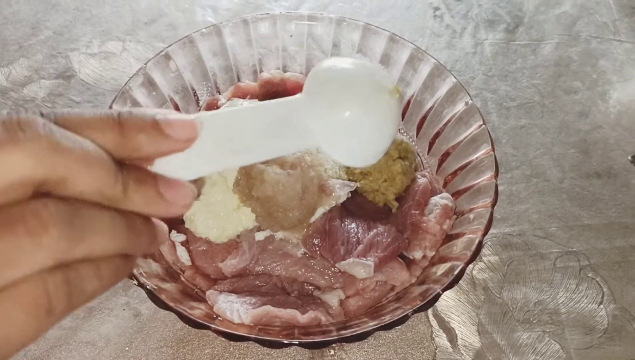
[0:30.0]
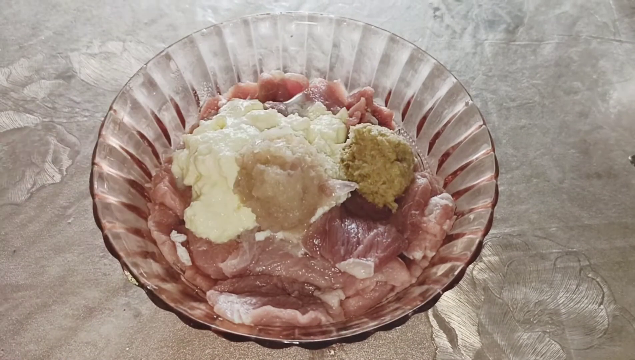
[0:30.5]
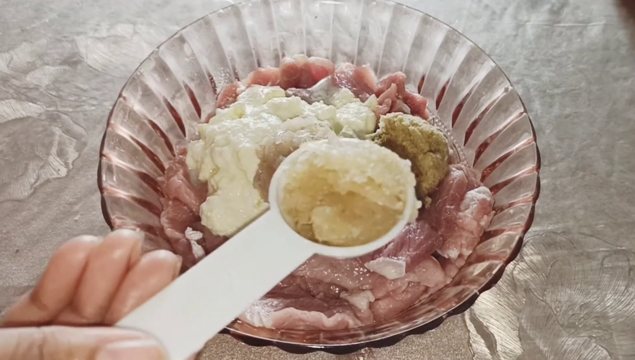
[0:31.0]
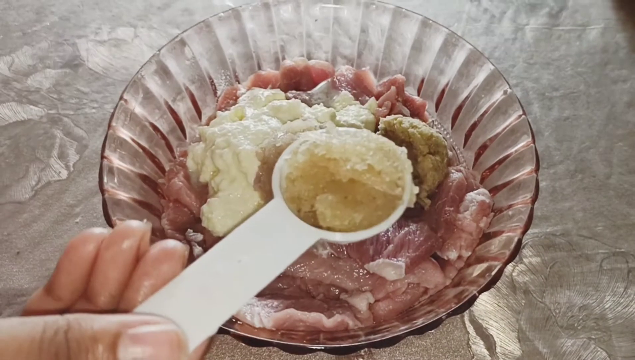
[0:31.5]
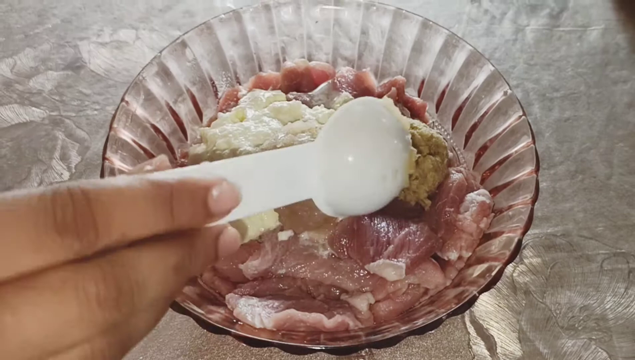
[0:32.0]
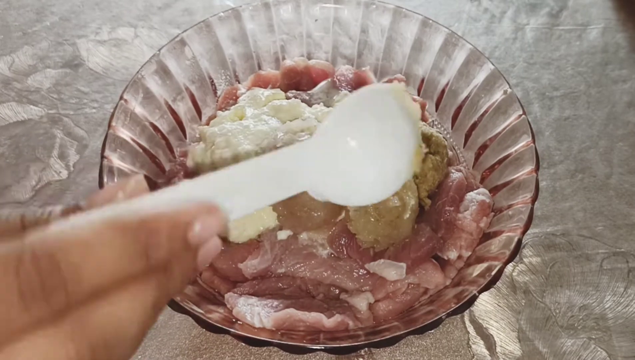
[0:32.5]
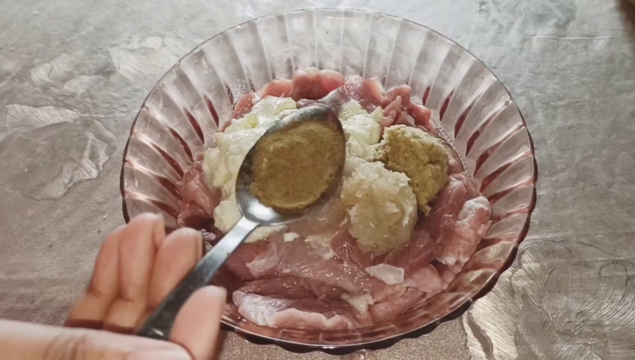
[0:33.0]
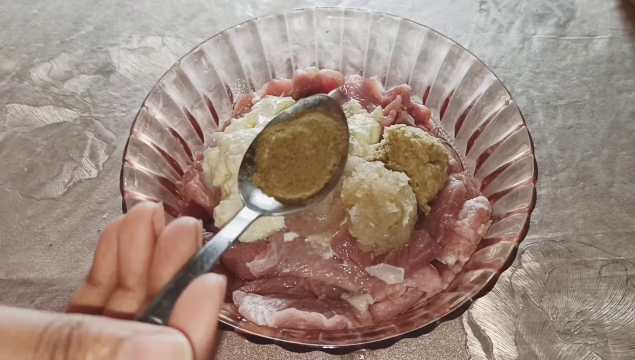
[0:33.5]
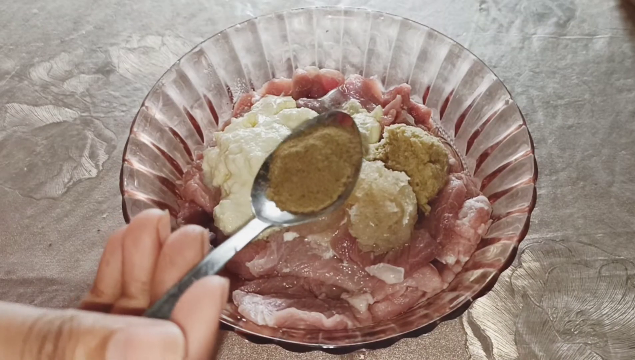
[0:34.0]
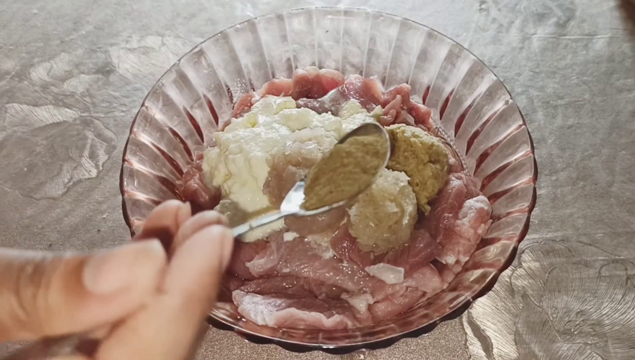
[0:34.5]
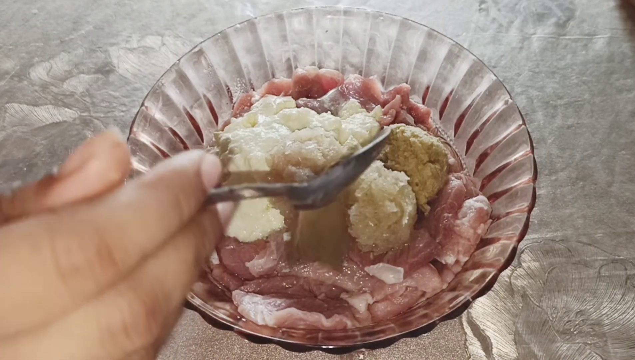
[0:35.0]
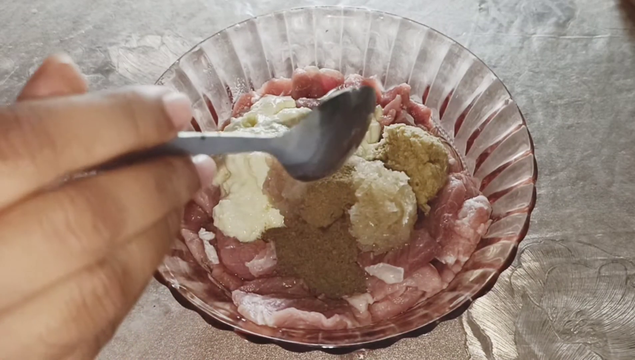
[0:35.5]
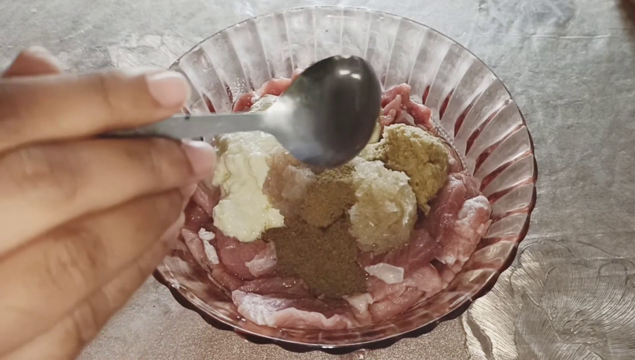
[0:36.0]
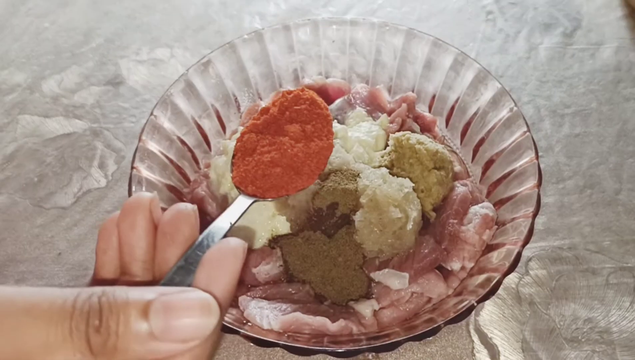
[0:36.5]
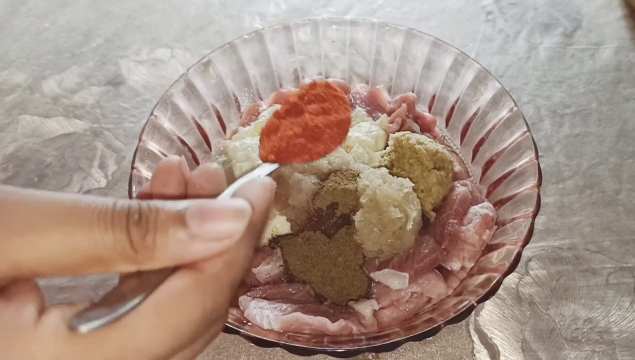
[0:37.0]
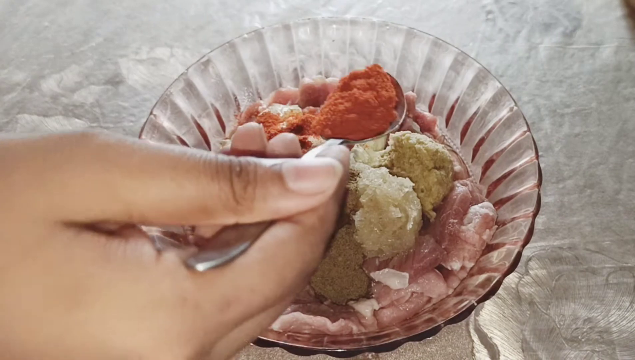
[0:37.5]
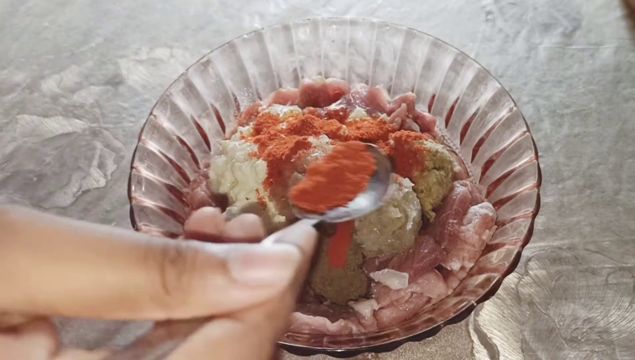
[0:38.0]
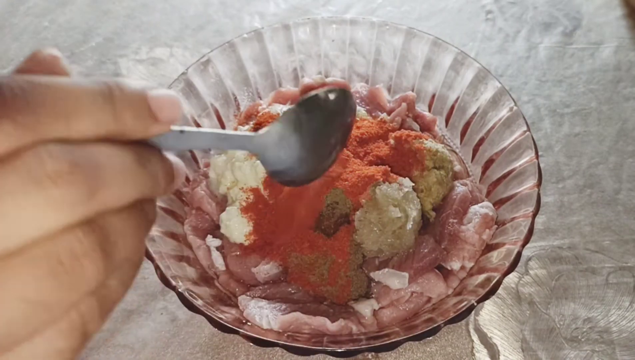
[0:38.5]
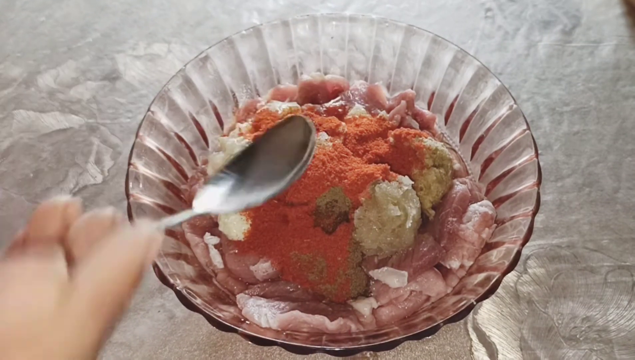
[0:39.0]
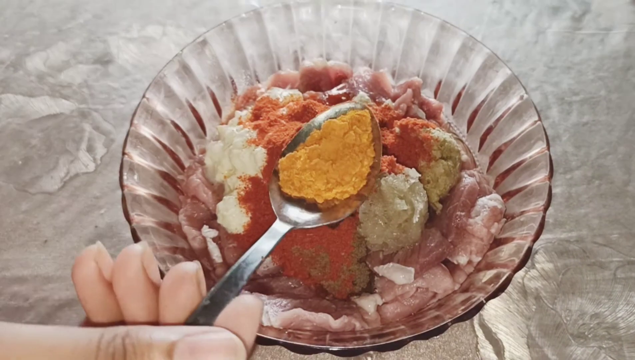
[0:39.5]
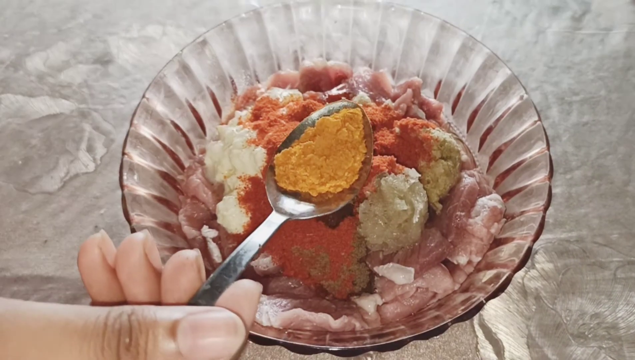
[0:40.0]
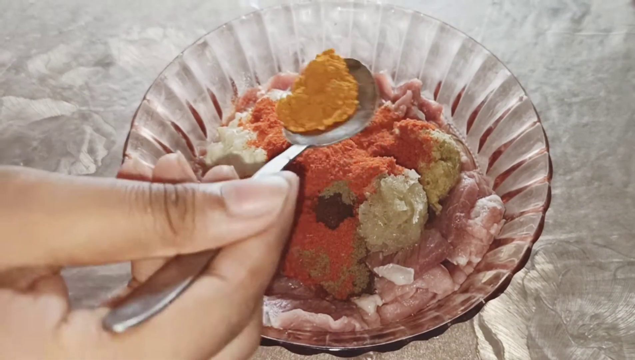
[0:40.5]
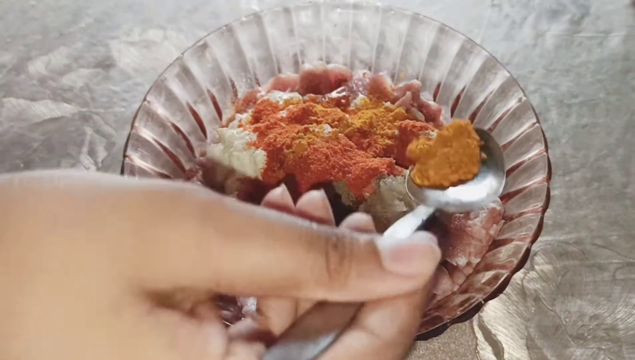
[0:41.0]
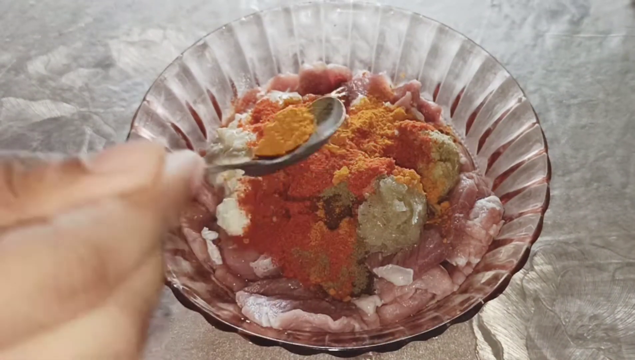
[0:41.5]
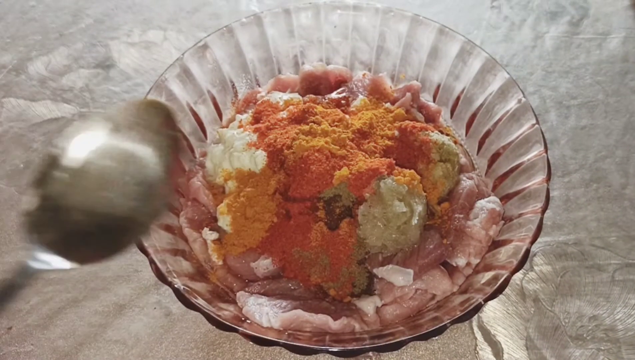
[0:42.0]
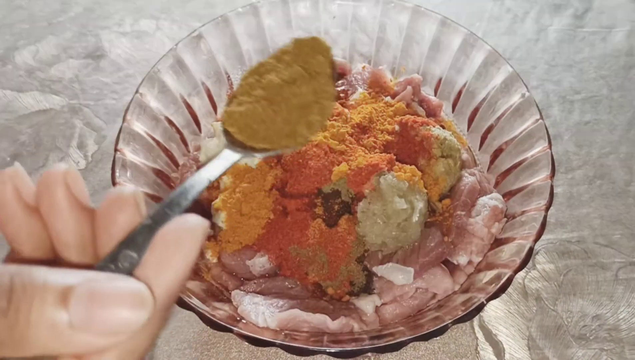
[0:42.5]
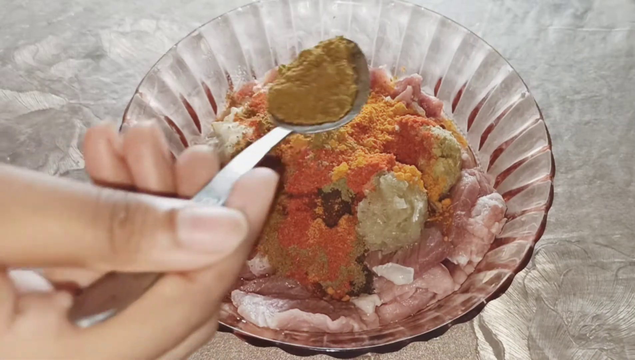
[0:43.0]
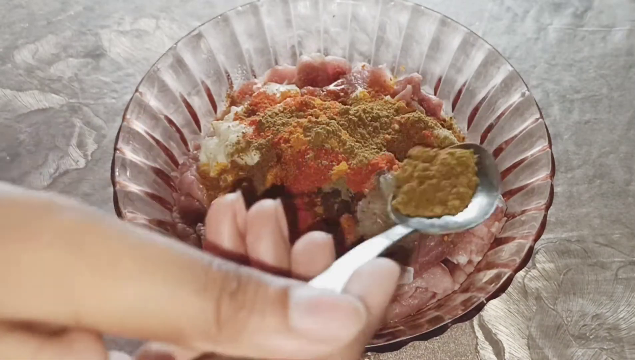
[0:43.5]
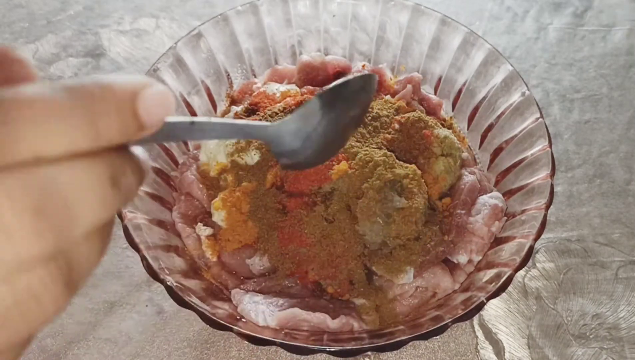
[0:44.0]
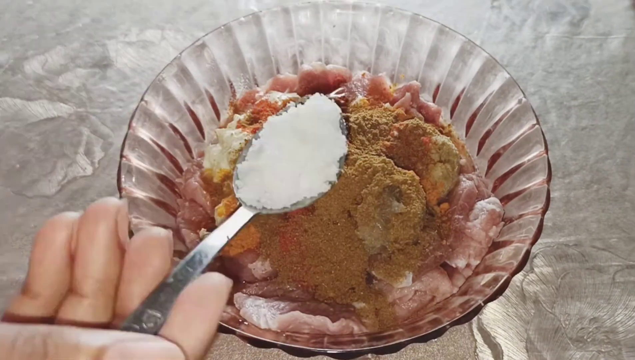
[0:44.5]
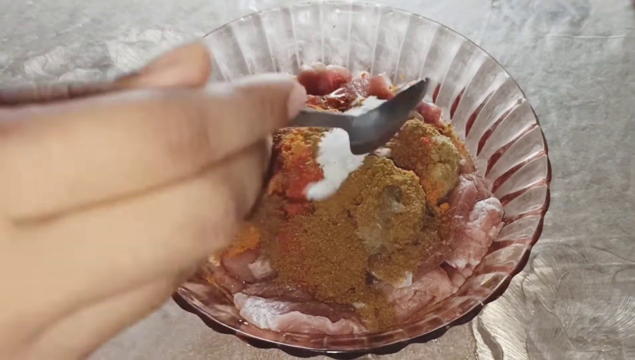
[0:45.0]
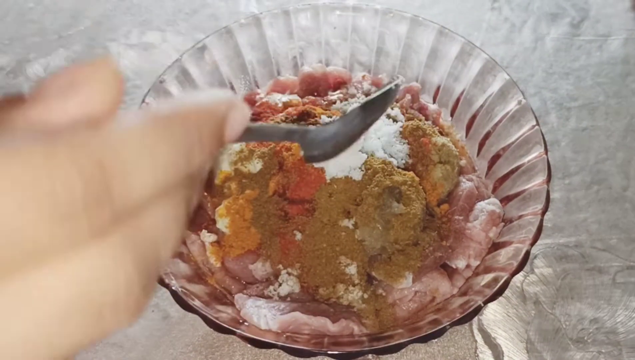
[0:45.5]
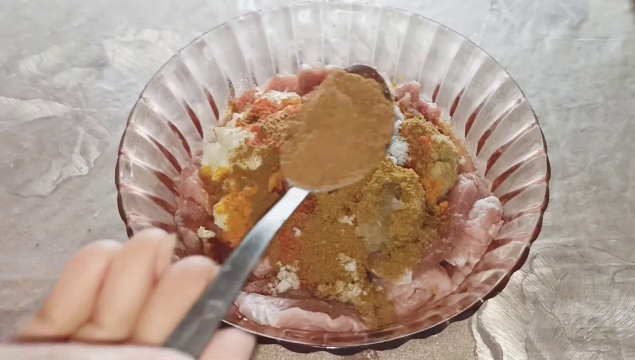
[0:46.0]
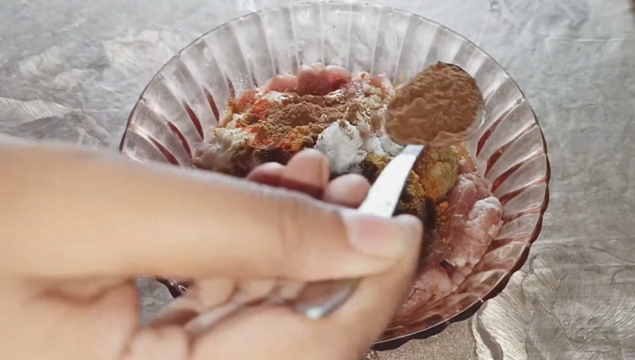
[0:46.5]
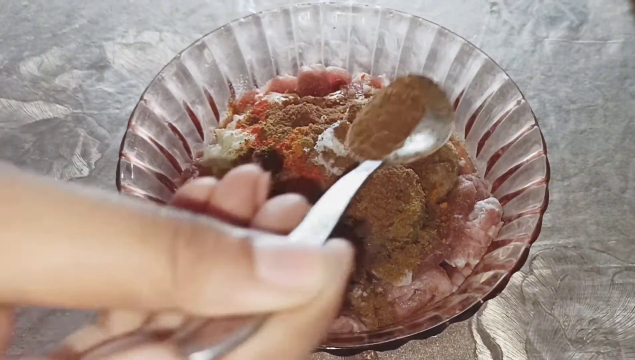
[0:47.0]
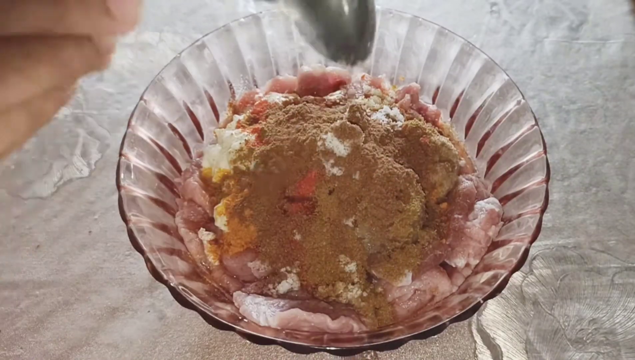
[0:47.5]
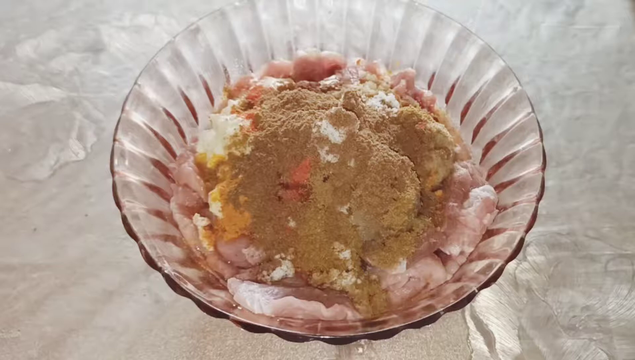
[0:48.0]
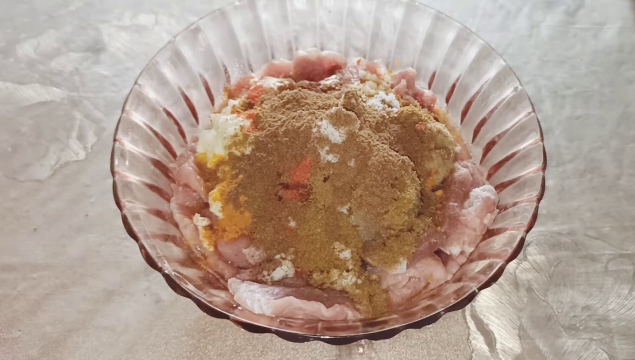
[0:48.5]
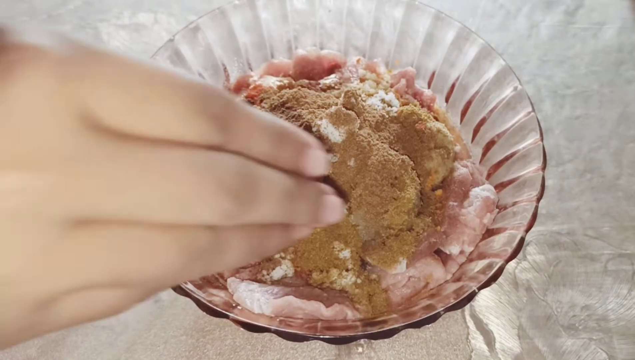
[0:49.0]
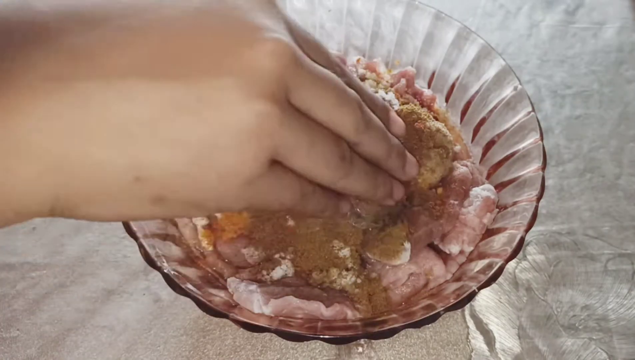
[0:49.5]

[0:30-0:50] A clear bowl is filled with meat cutlets topped with a white creamy mixture and a dark gray creamy mixture. The video then transitions to a person adding seasonings and toppings into the bowl one by one with a tablespoon: first a dark brown seasoning, then a bright red one, a light yellow one and a very light brown one, followed by a white seasoning and another dark brown seasoning. The person then begins mixing the concoction directly with their hands. The white bowl is on top of a silver tablecloth with a distinctive floral pattern visible in the bottom right. The implements used to add the seasoning include a white tablespoon measuring device and a silver tablespoon.